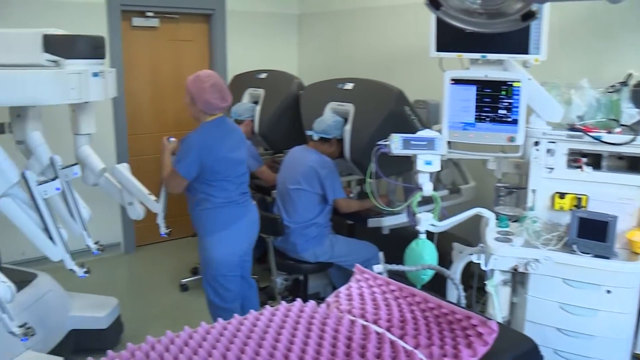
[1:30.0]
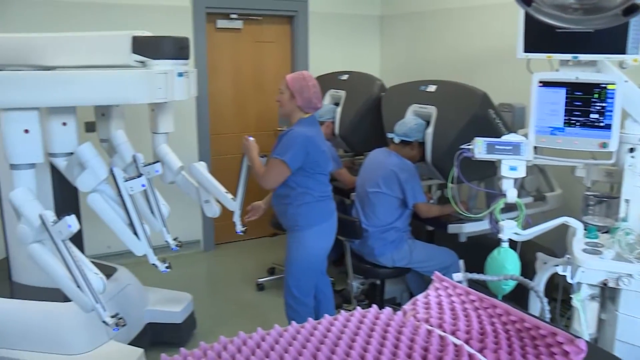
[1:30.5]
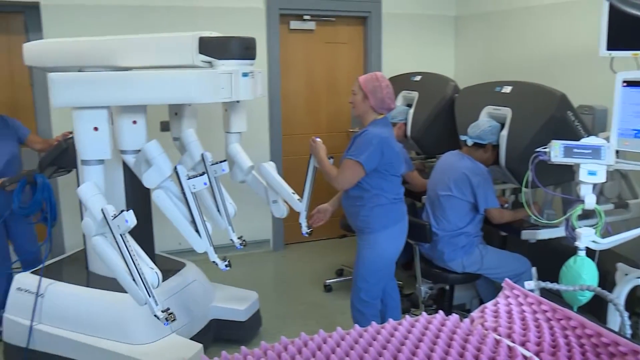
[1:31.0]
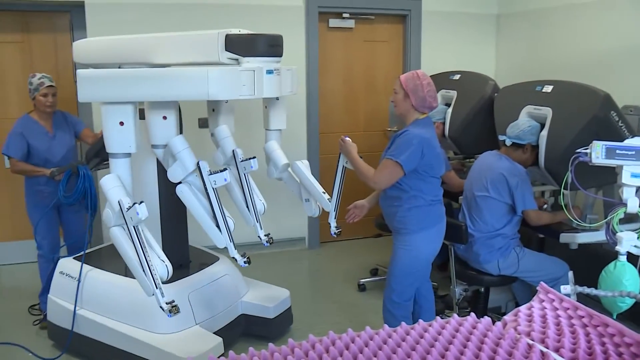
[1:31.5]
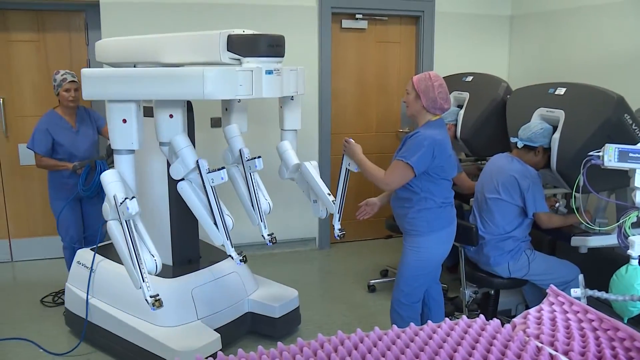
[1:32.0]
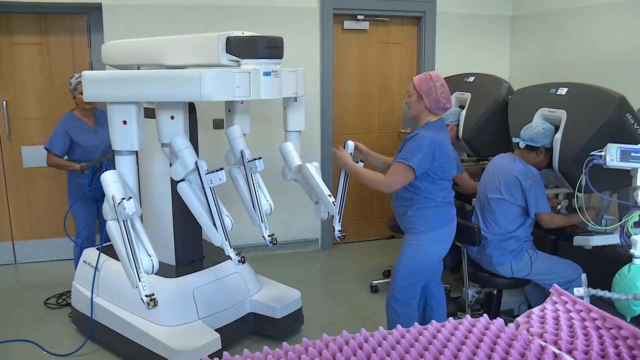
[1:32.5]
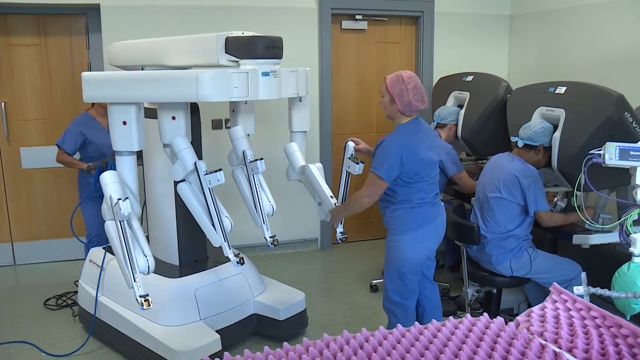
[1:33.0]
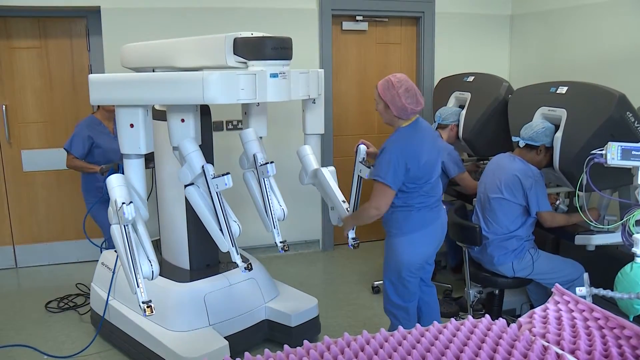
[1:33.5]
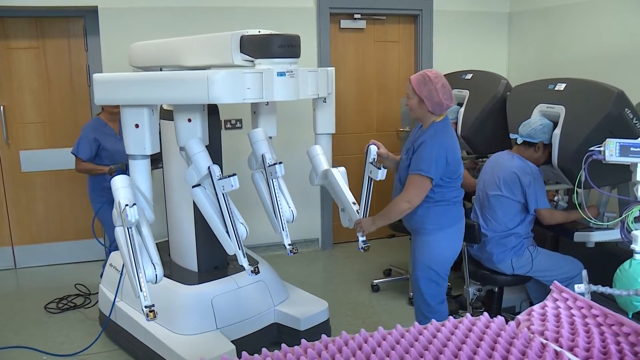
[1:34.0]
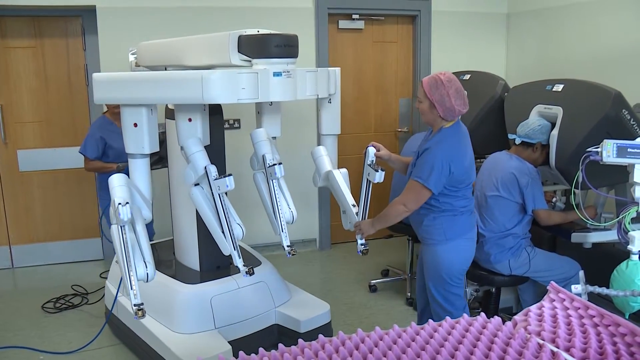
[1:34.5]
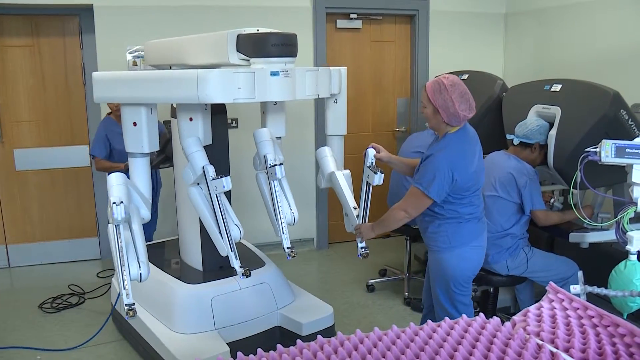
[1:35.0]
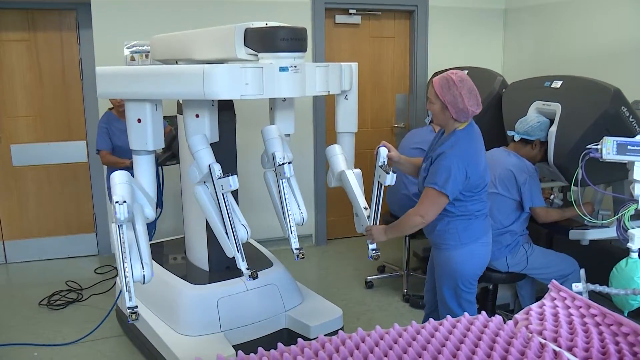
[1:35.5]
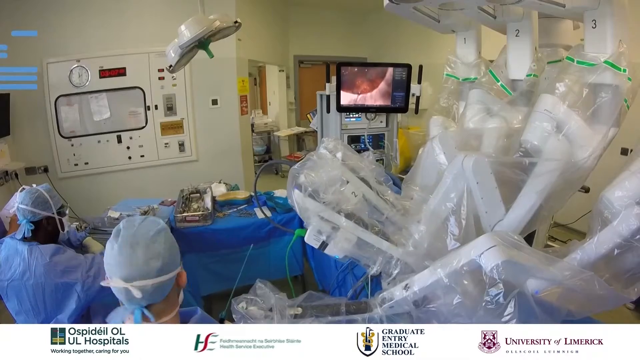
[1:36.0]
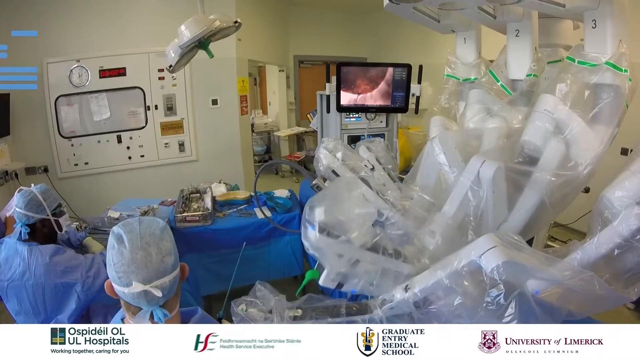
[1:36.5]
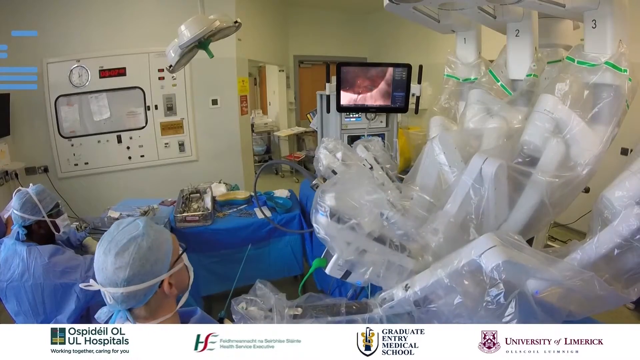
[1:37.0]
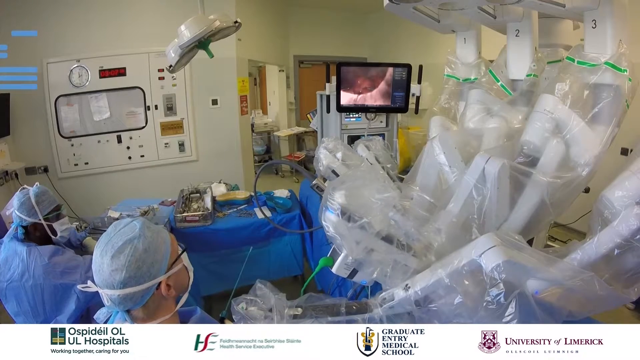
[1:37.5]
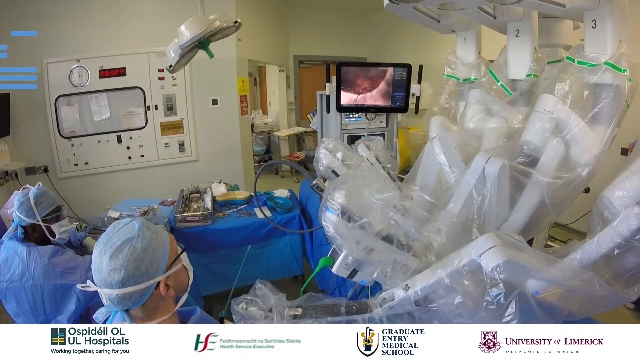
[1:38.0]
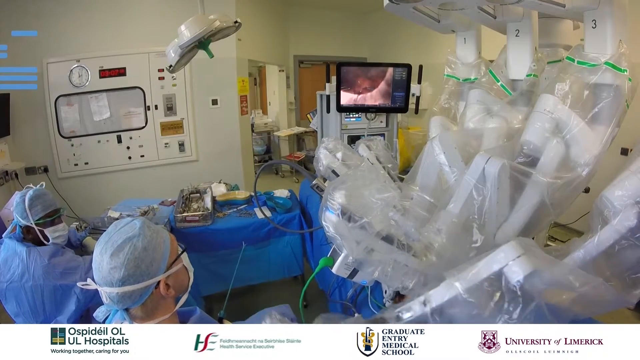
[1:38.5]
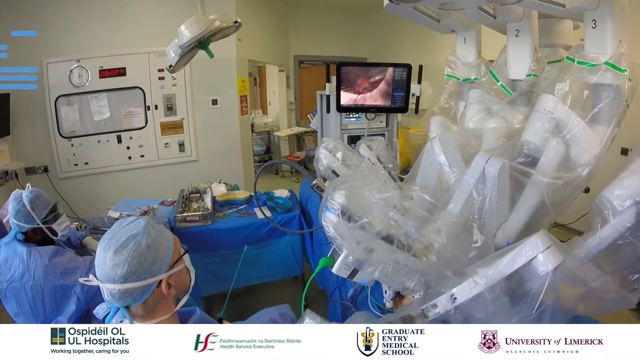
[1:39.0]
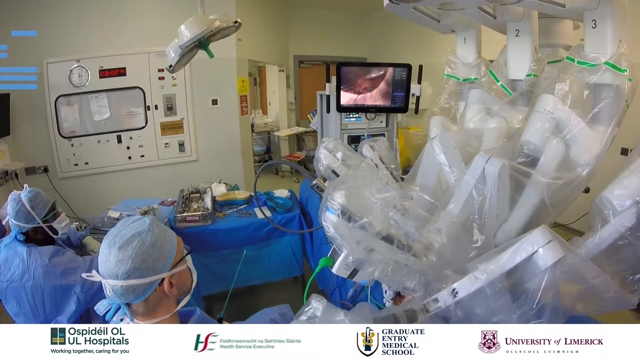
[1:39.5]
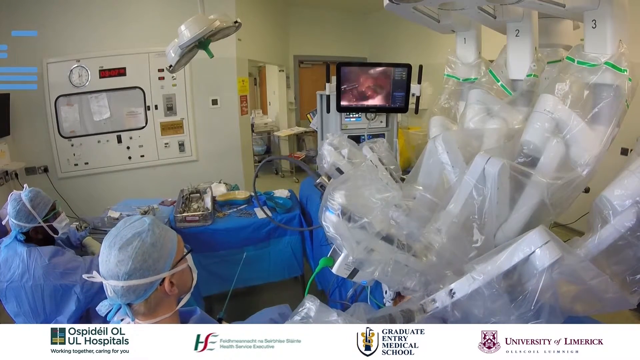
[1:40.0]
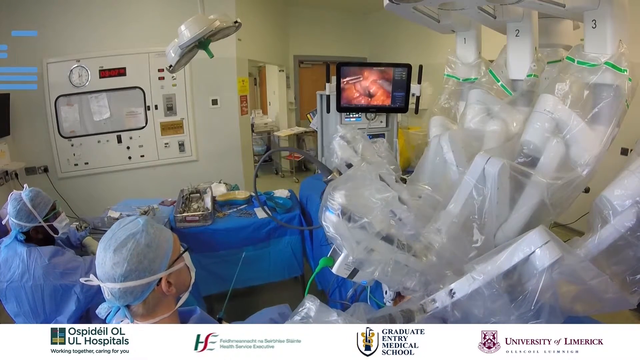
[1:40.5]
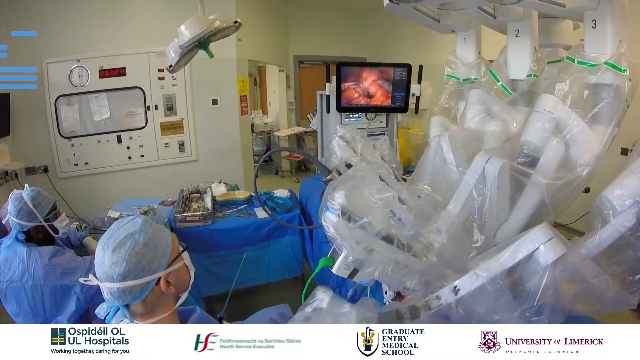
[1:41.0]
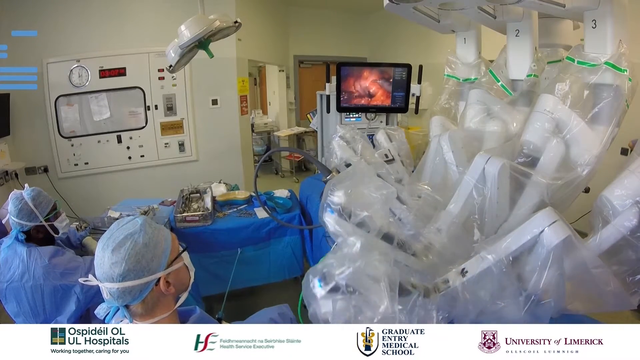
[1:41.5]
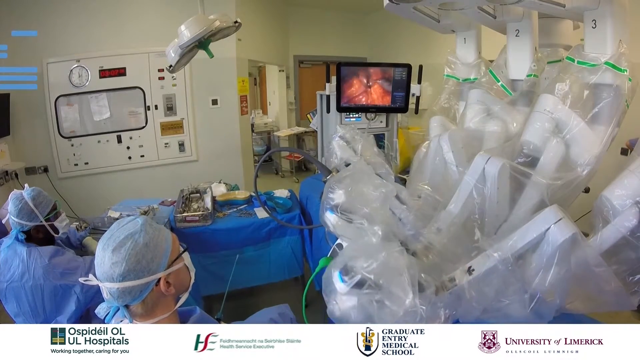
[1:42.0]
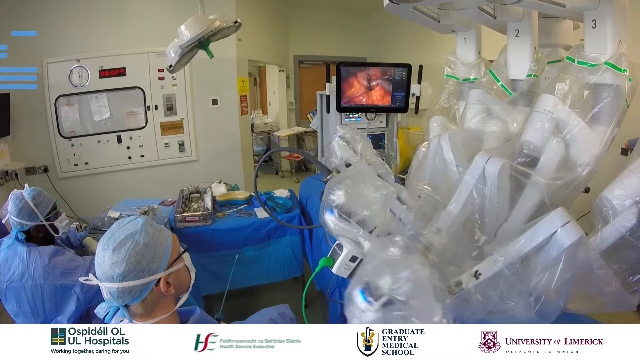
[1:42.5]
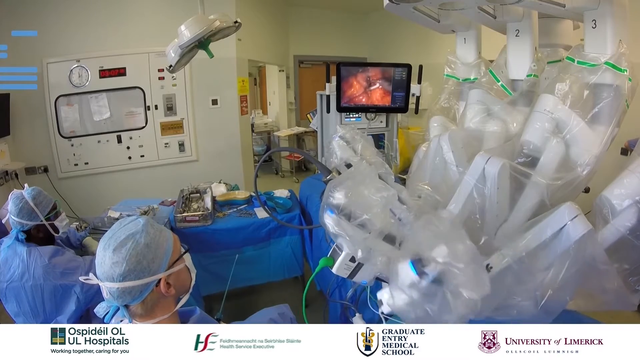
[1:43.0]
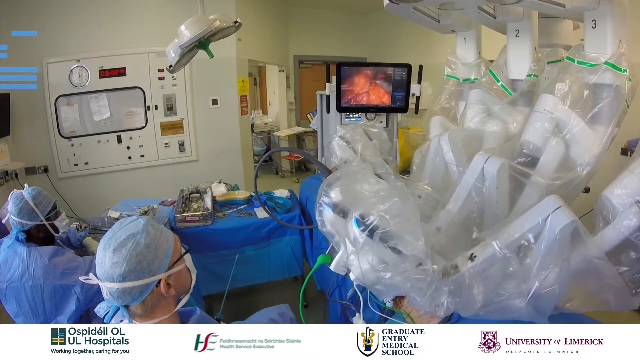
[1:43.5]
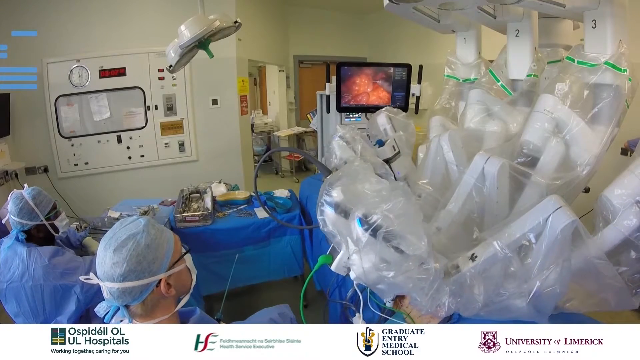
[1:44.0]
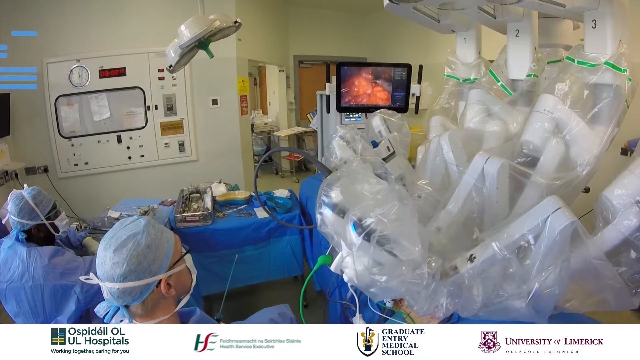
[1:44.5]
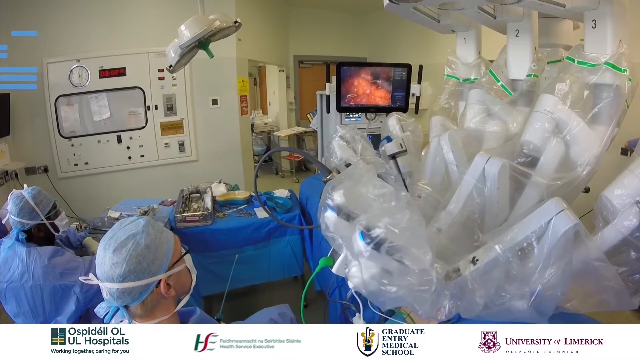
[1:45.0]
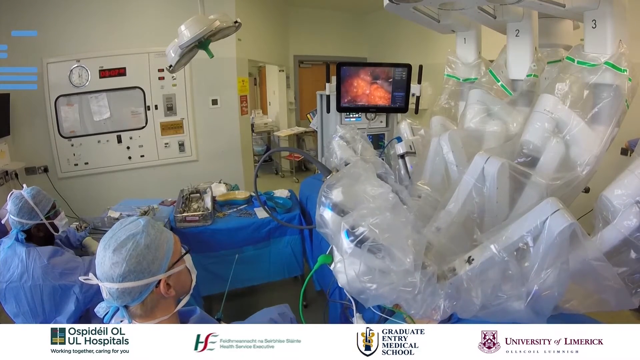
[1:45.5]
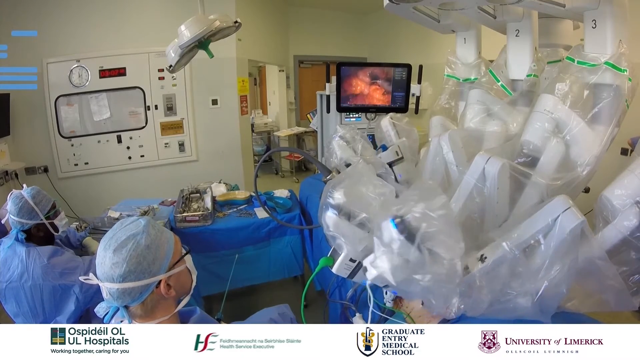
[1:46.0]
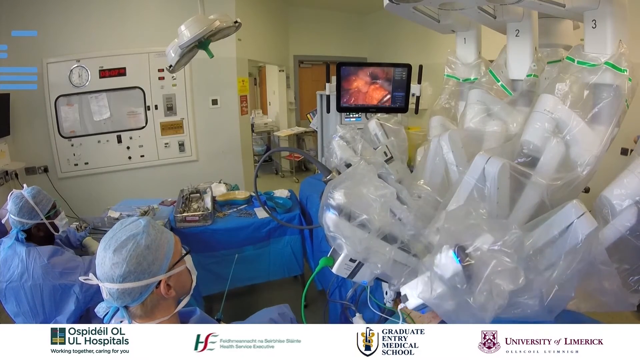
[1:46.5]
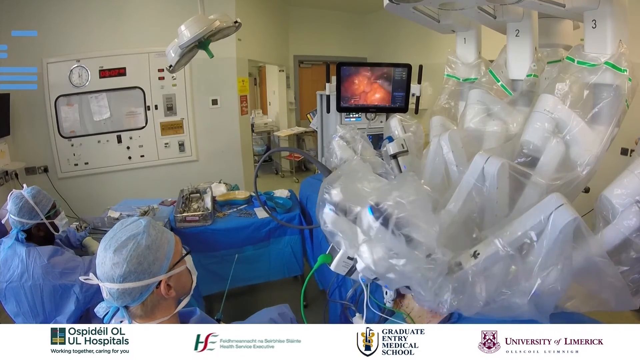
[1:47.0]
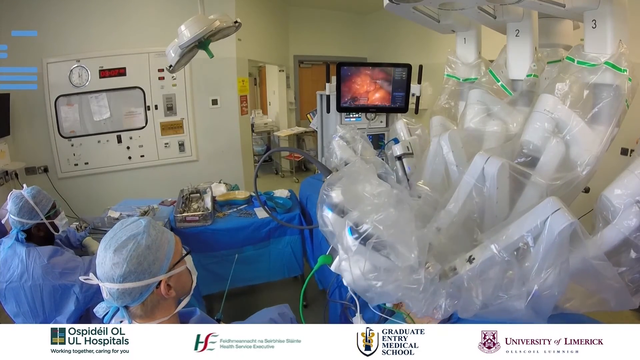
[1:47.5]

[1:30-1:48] Three medical professionals are in a medical office. The two on the right sit with their heads buried in the monitors of large black machines, wearing blue caps and blue scrubs. The one on the left wears a pink cap and blue scrubs and faces left. On the left side of the frame are large white machines with white arms that extend out. The camera pans to the machines, showing another medical professional on the left operating the machines to turn and rotate them to the left. The medical professional with the pink cap holds on to the machine's rightmost arm. The scene switches to a surgery room where the machine's arms are covered in plastic; one arm moves to the left, and then several of the arms move to the left and up.